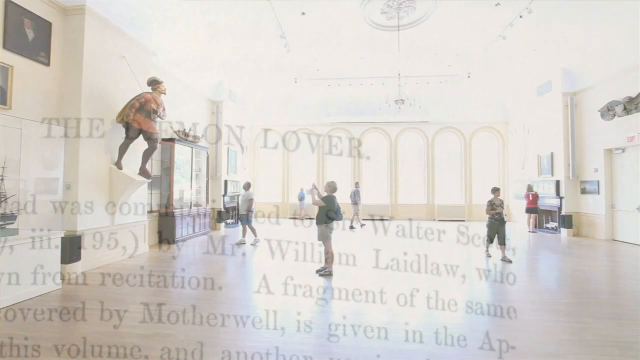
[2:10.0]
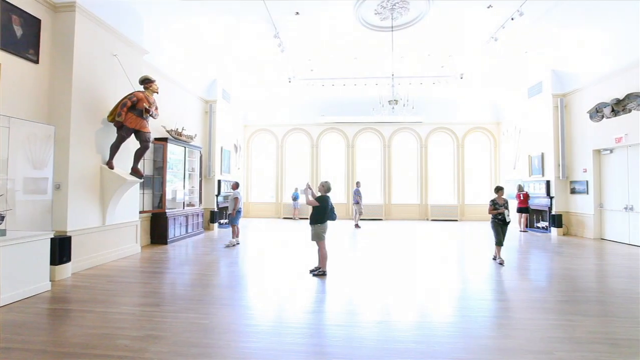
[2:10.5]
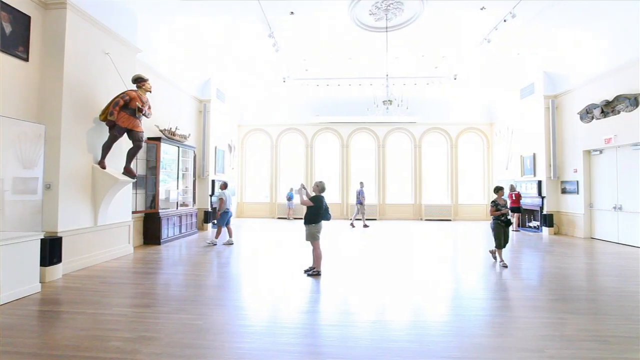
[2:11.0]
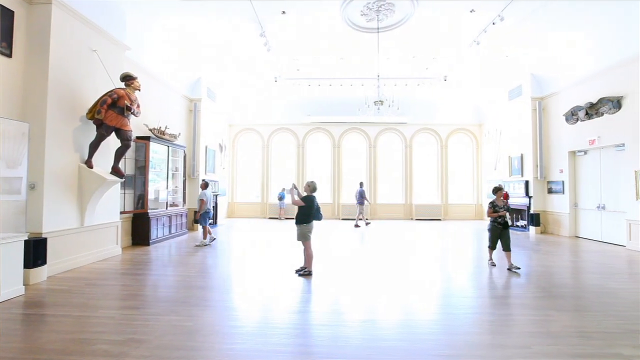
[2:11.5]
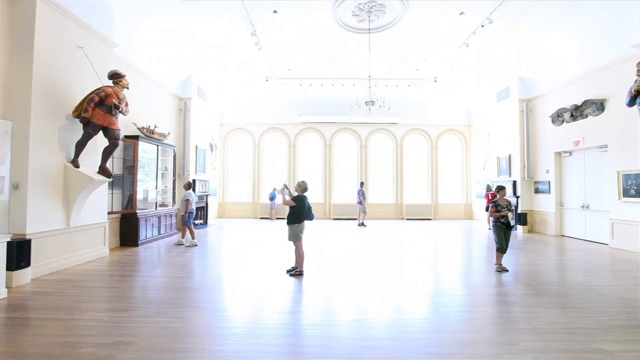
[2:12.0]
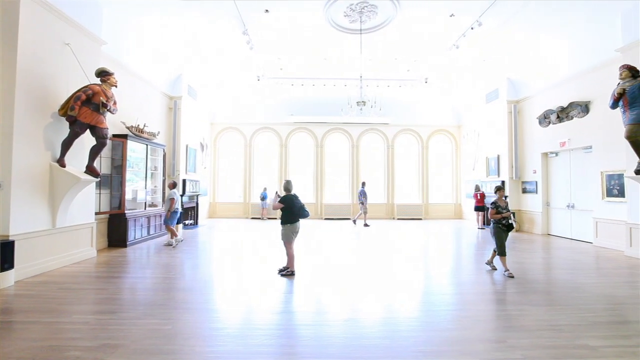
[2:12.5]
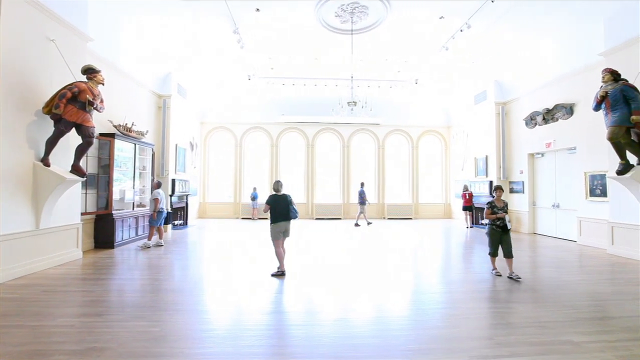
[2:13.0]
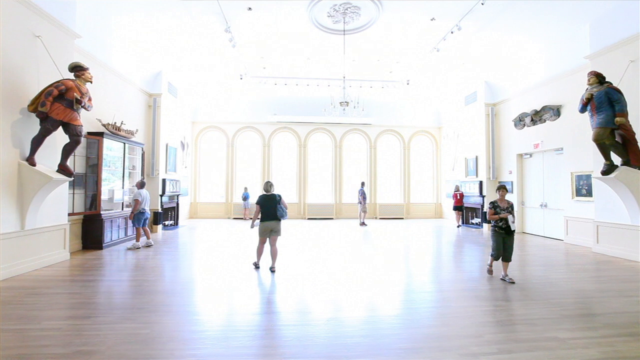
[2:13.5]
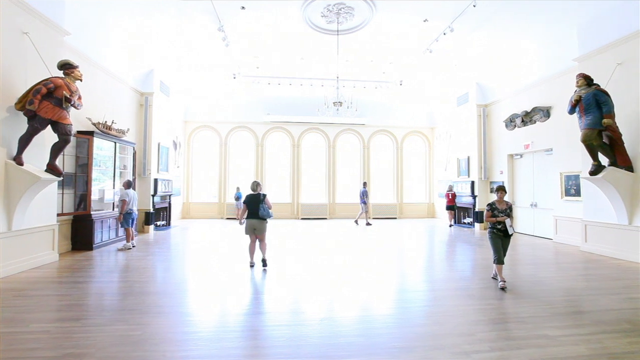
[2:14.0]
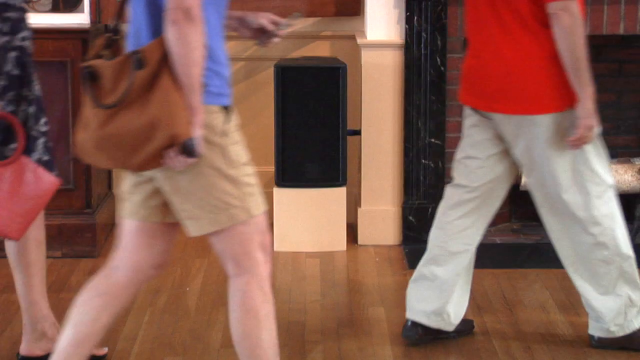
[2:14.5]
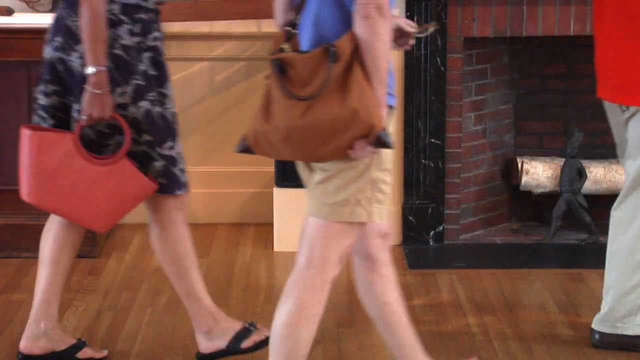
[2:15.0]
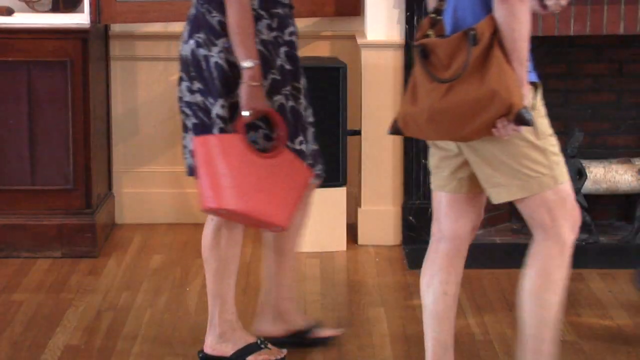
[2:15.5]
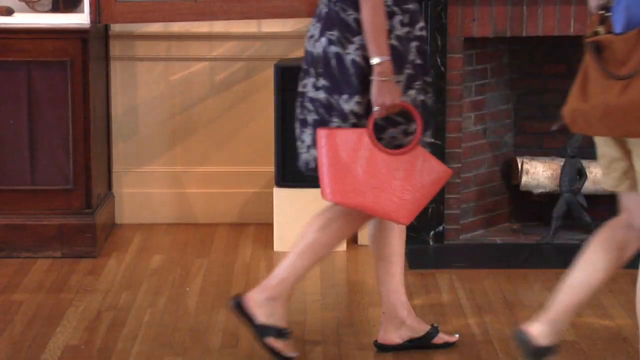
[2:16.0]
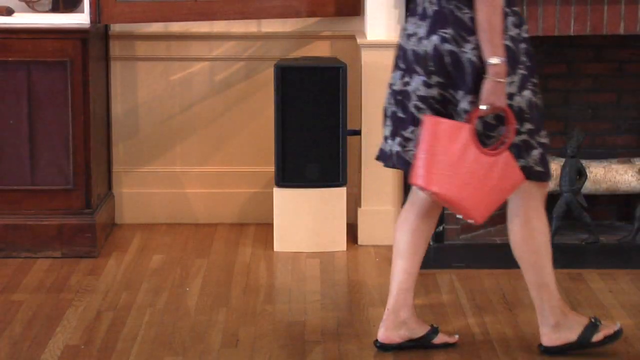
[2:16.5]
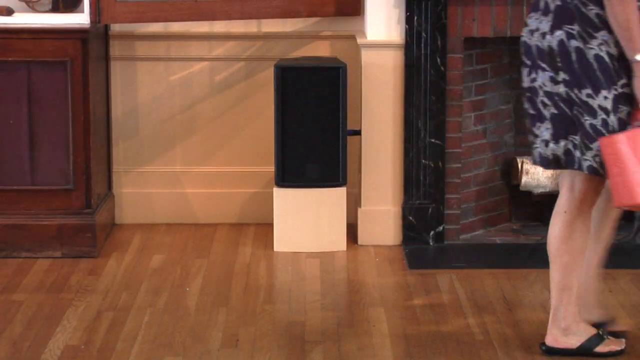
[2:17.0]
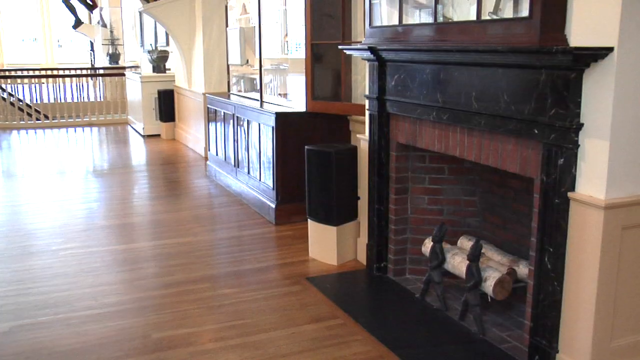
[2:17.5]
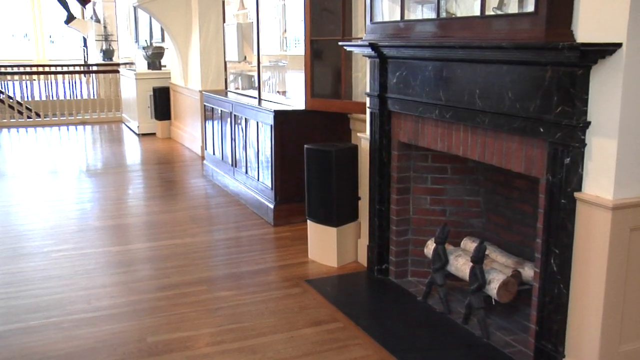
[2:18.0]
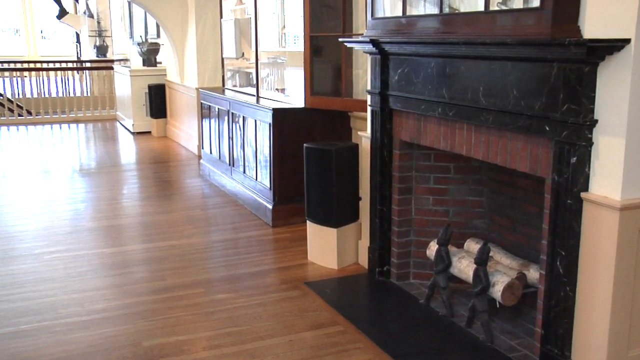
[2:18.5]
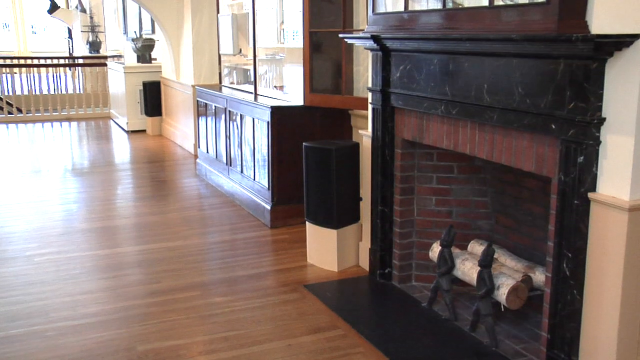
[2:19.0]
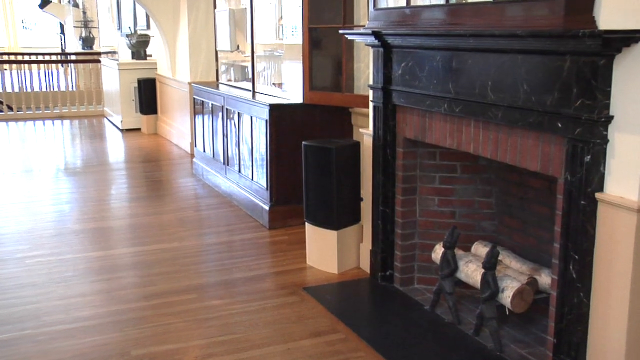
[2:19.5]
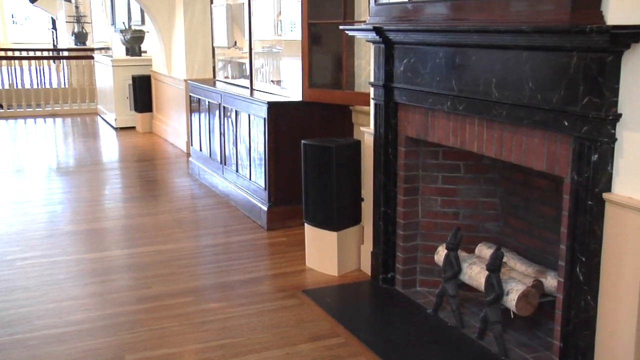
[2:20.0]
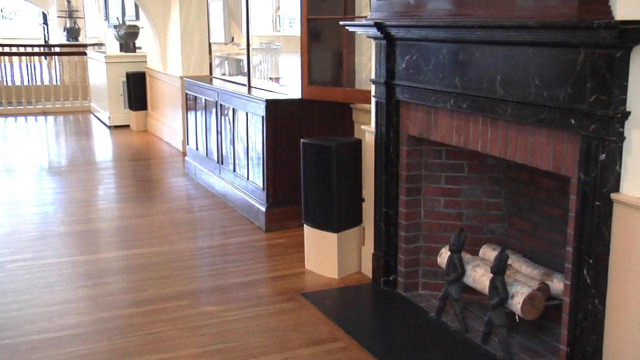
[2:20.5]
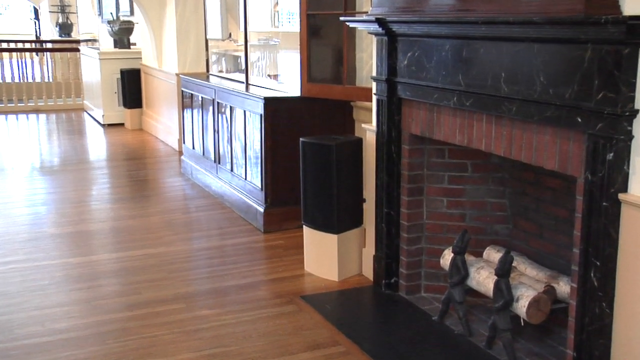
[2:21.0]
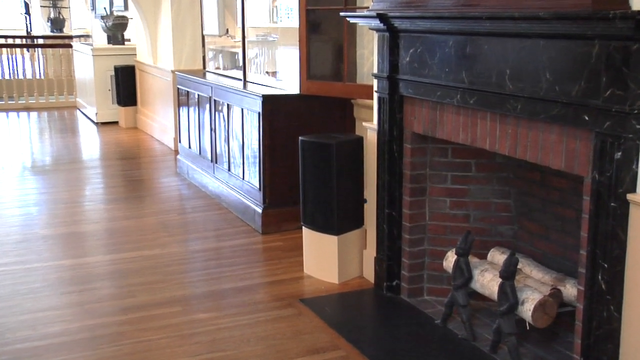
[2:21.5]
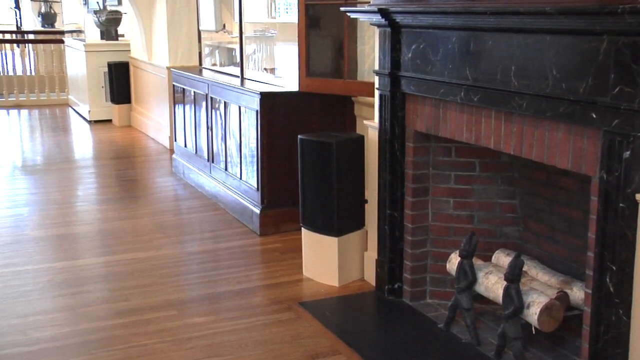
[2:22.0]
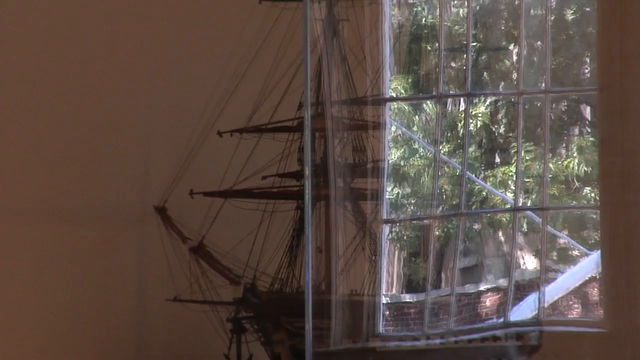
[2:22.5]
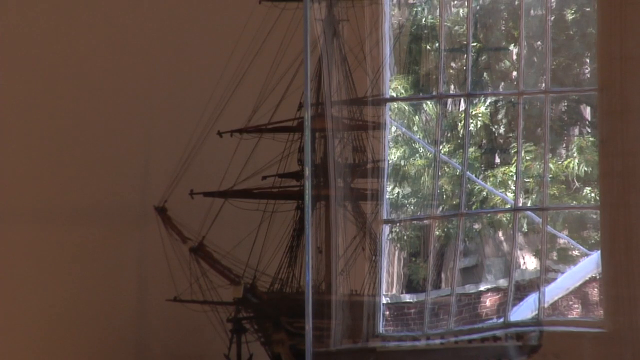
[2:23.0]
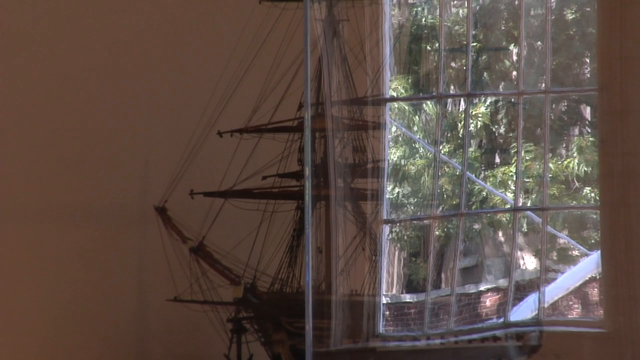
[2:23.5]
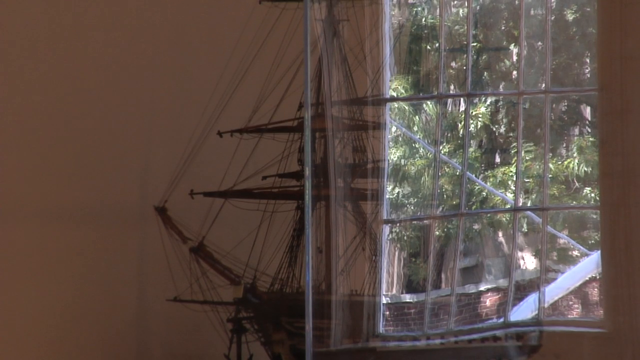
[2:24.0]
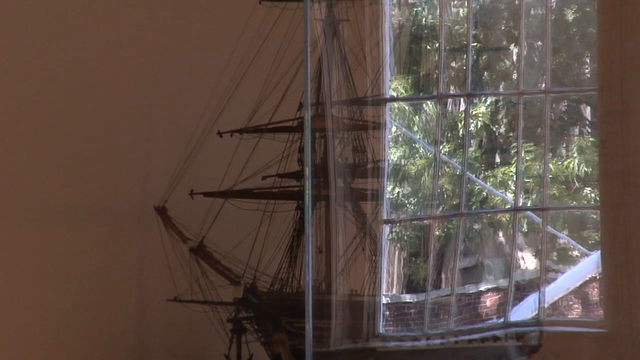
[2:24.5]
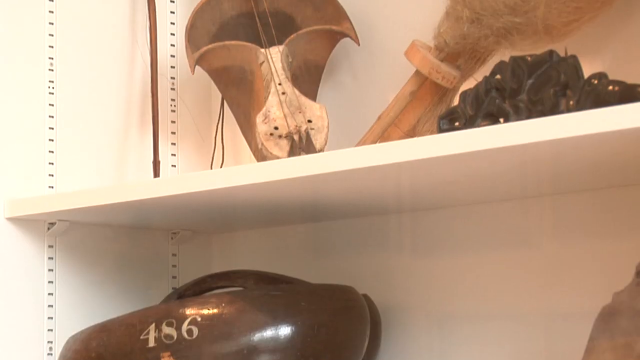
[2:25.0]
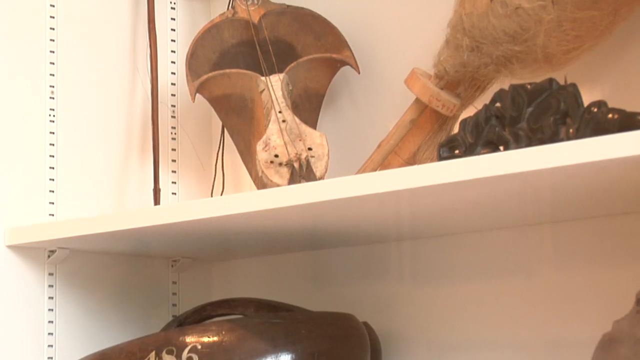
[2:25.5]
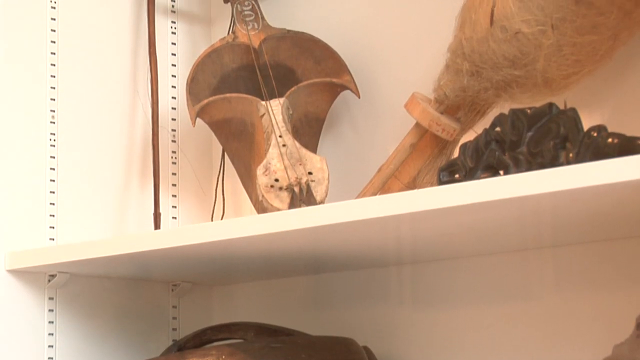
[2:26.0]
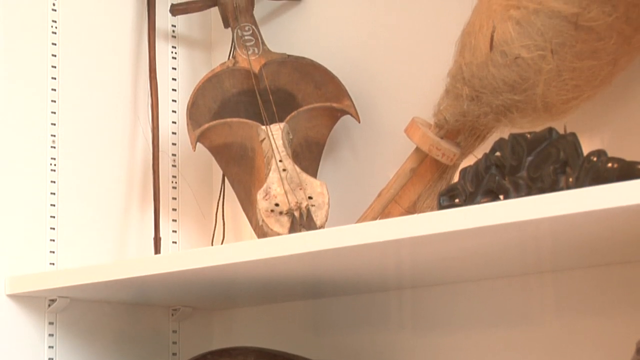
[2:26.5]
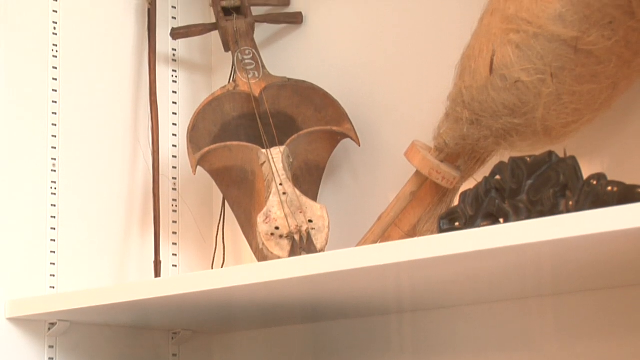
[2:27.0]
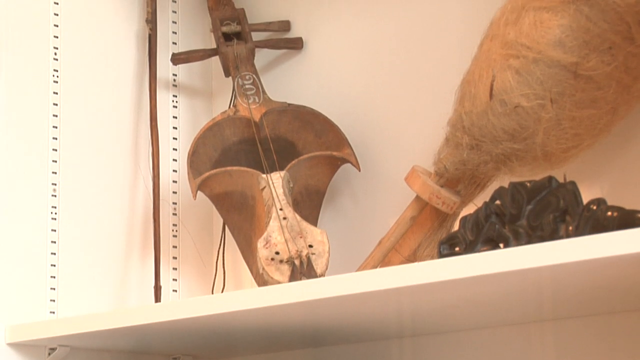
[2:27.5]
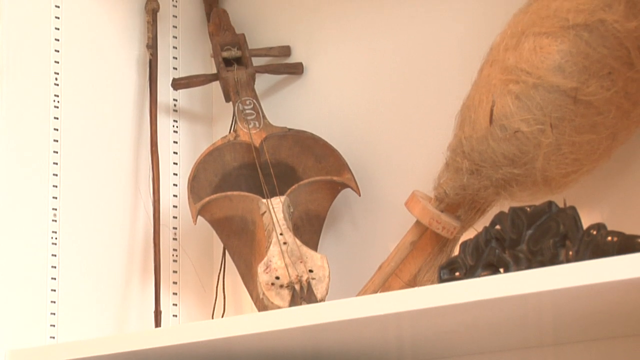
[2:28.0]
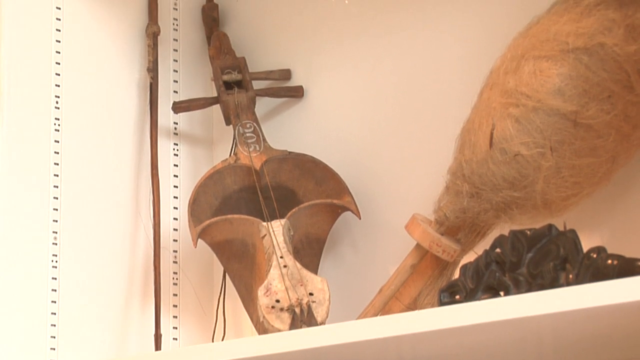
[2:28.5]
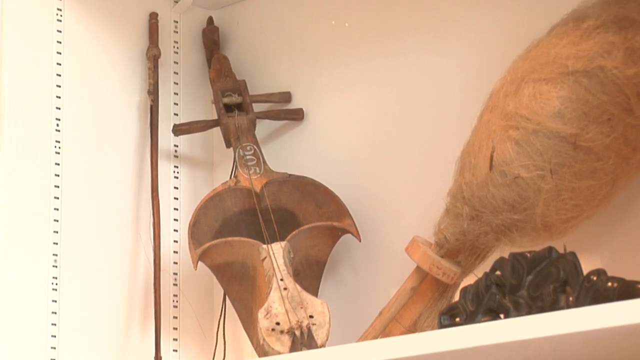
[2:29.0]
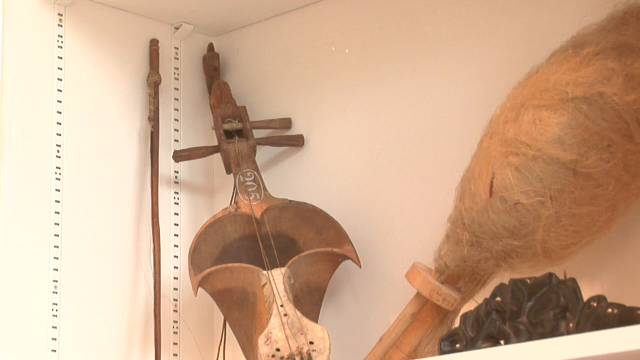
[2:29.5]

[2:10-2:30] People walk around in a museum. A full statue juts out from the upper left-hand wall. Six people walk in all different directions: a man on the left-hand side wears blue jean shorts and white shoes, a woman takes a picture of the statue on the left, two more are in the background on the left, and two are on the right-hand side. The camera pans from left to right as they walk around. Three people walk across the hall in front of modern-day speakers. The video cuts to a ship, looking out a window, and then to a very old musical instrument on a wall, possibly a violin.